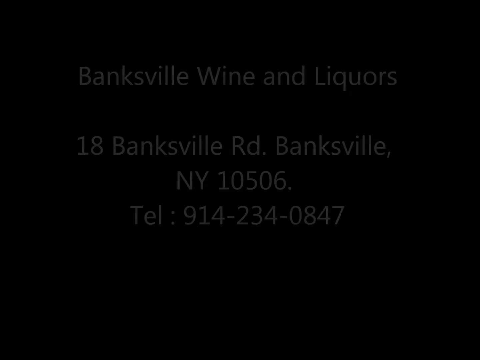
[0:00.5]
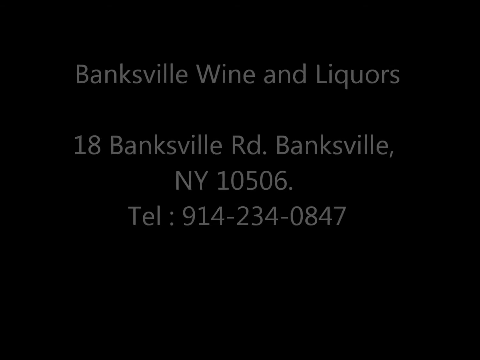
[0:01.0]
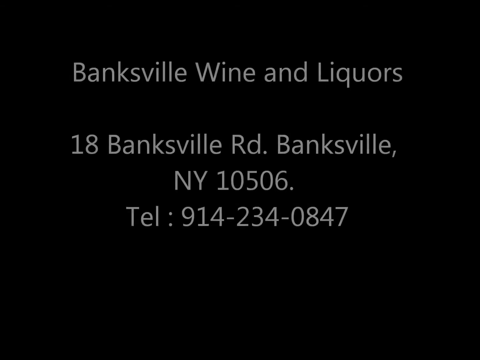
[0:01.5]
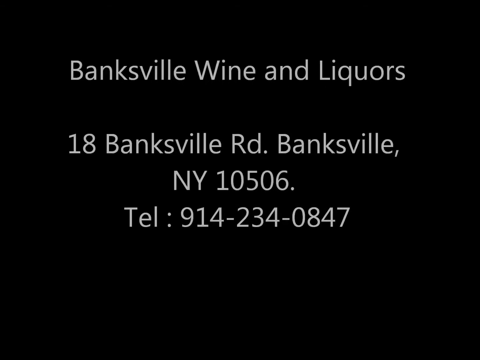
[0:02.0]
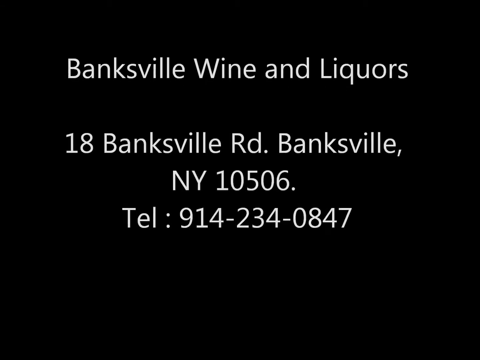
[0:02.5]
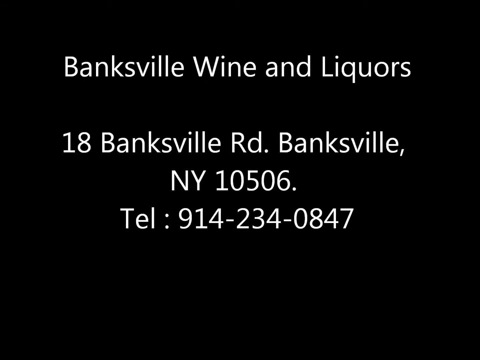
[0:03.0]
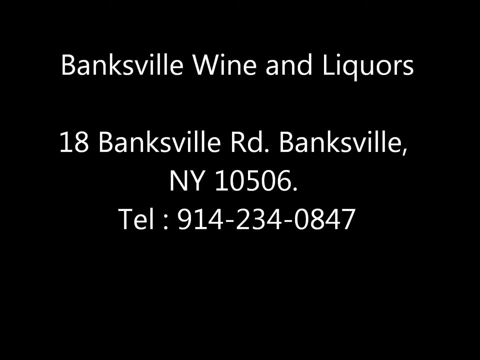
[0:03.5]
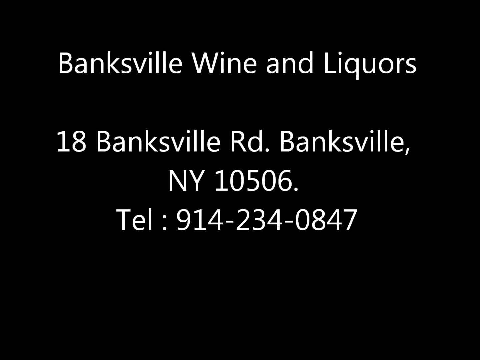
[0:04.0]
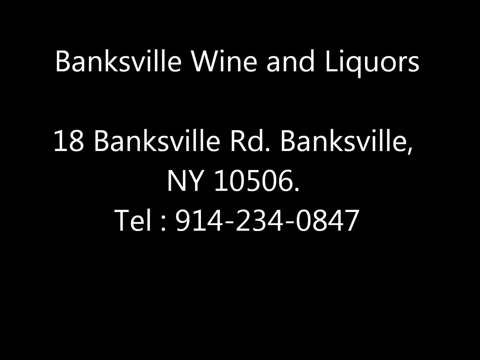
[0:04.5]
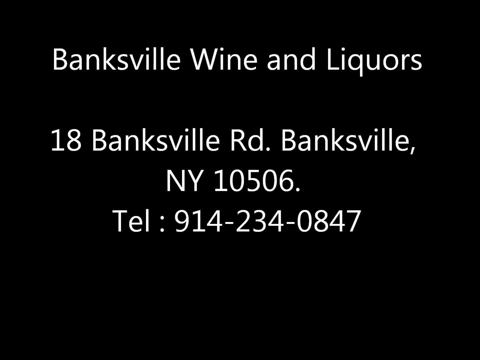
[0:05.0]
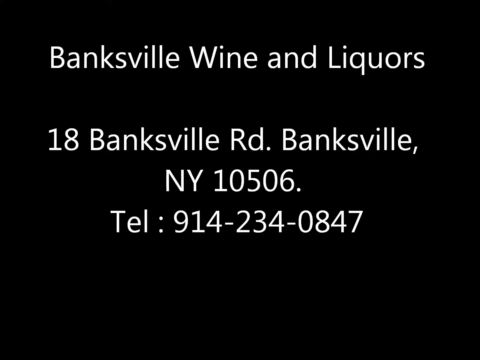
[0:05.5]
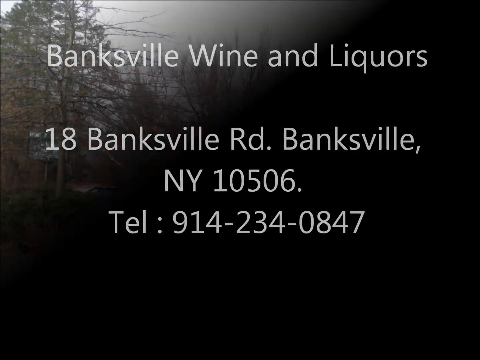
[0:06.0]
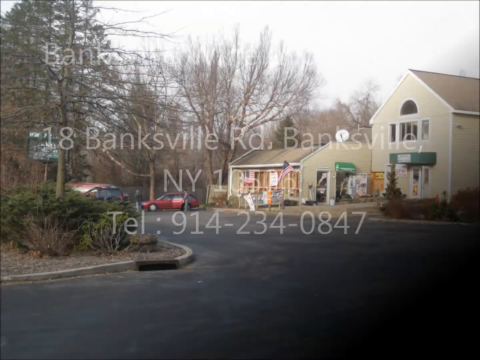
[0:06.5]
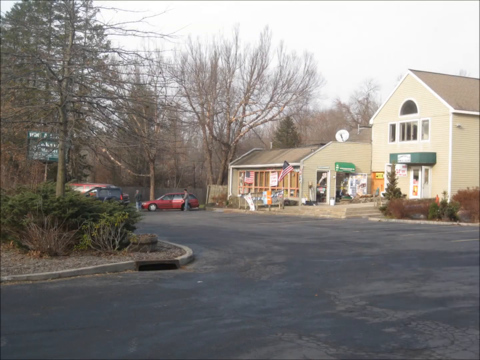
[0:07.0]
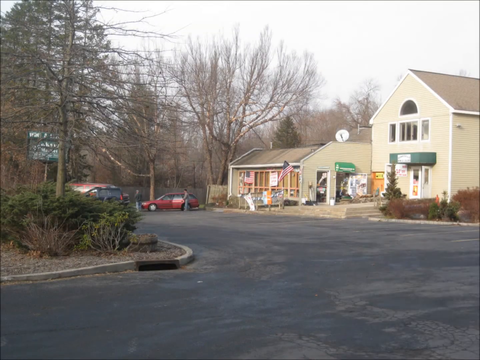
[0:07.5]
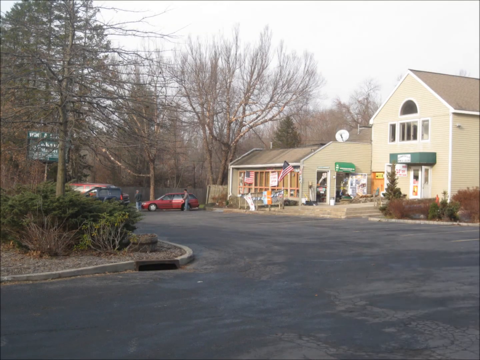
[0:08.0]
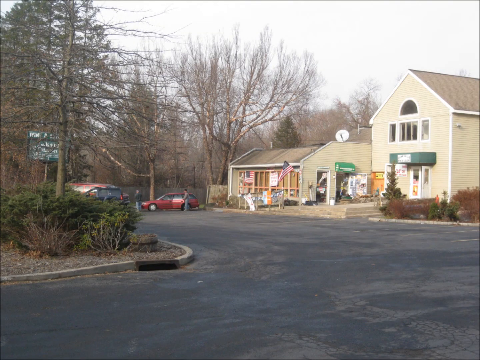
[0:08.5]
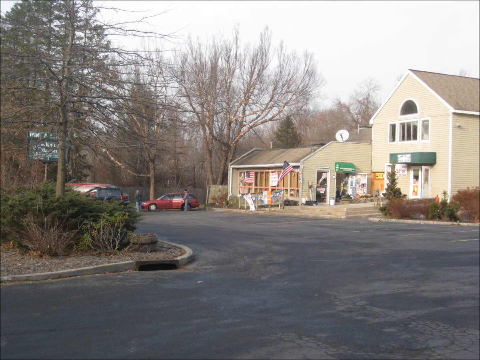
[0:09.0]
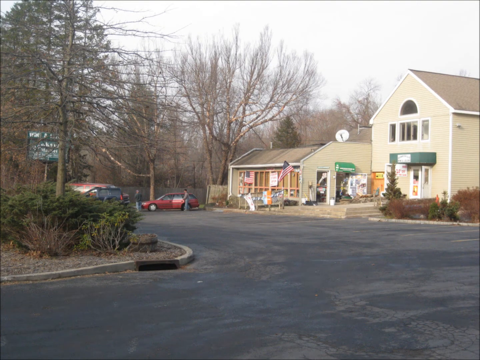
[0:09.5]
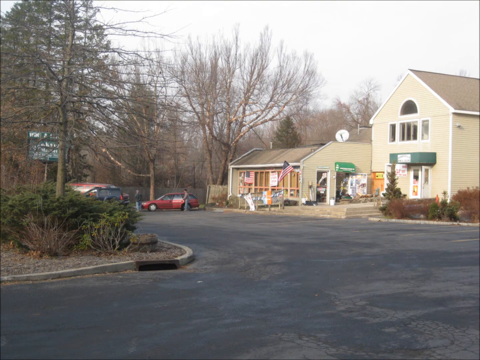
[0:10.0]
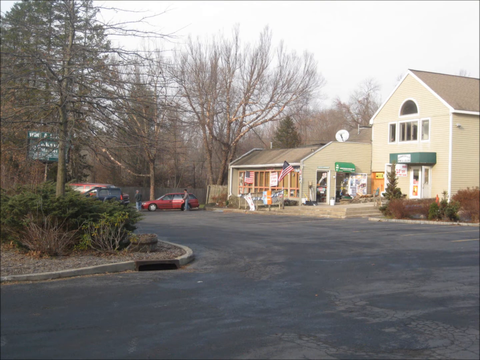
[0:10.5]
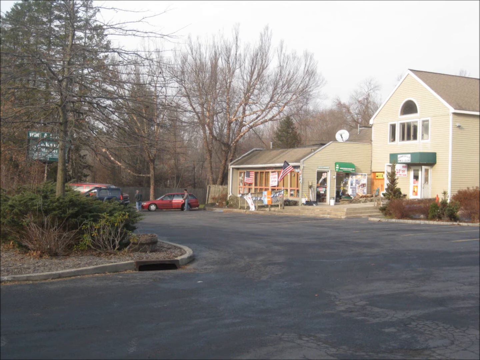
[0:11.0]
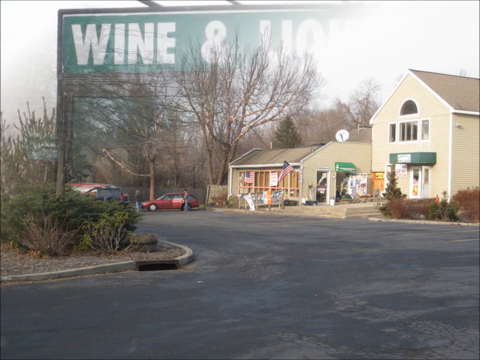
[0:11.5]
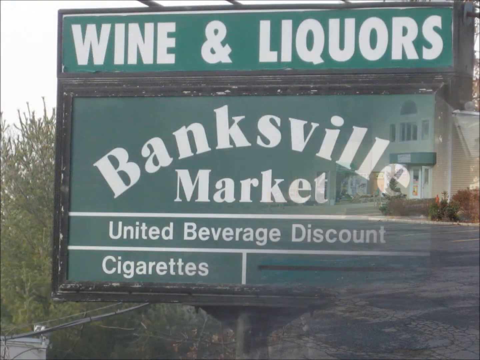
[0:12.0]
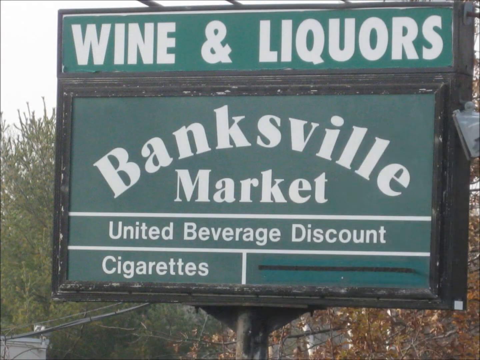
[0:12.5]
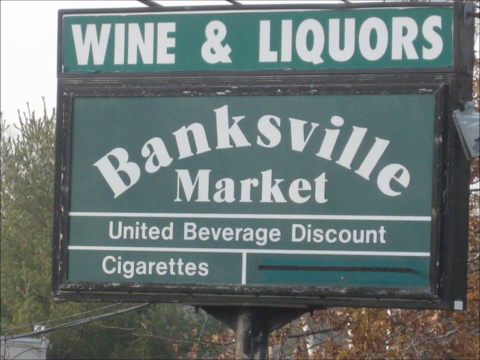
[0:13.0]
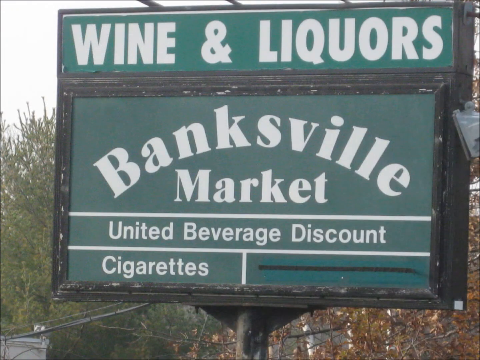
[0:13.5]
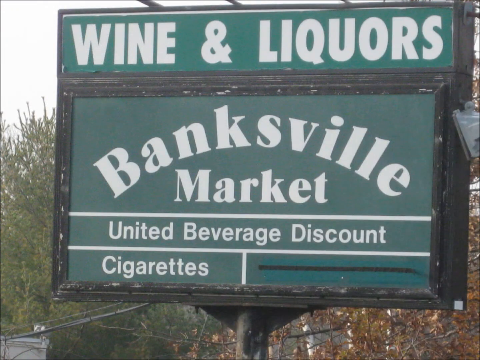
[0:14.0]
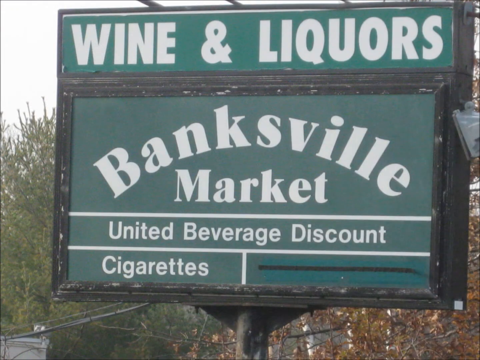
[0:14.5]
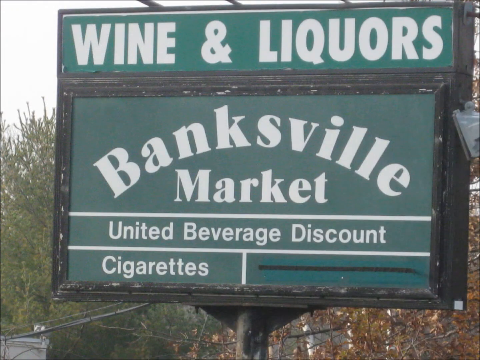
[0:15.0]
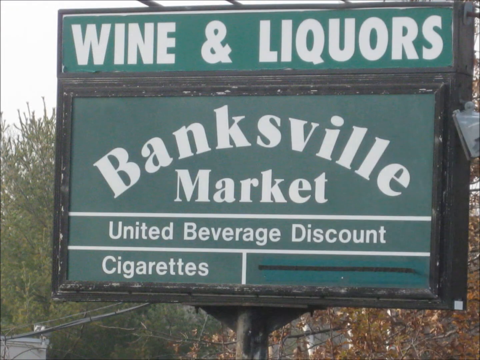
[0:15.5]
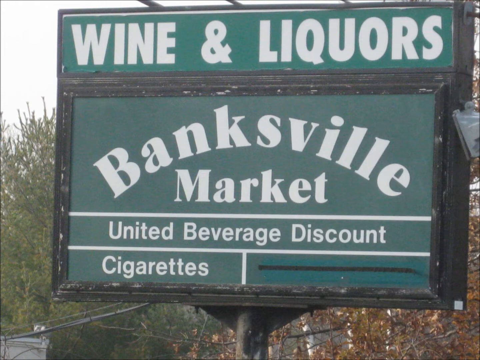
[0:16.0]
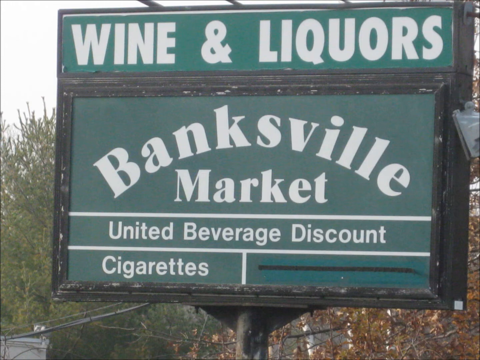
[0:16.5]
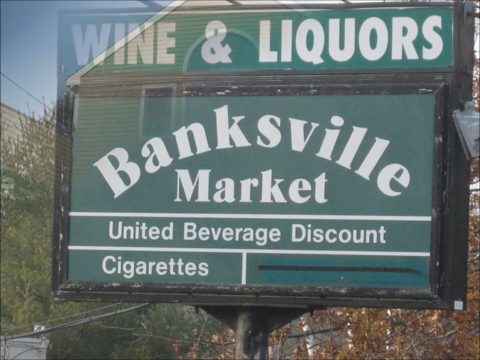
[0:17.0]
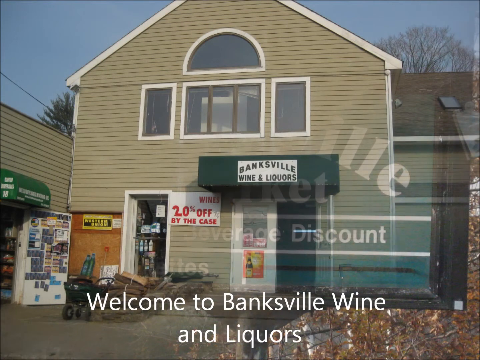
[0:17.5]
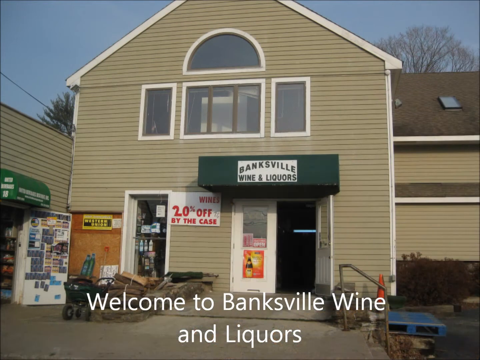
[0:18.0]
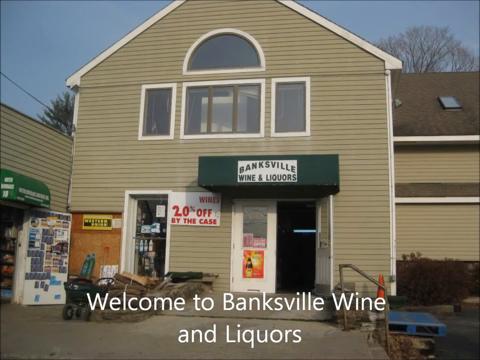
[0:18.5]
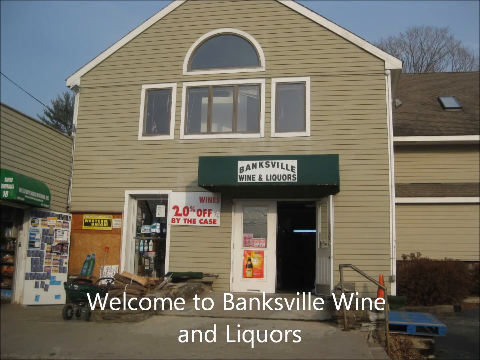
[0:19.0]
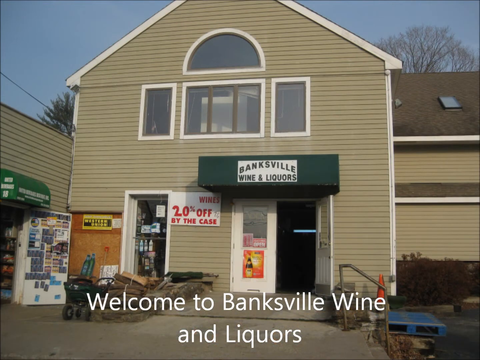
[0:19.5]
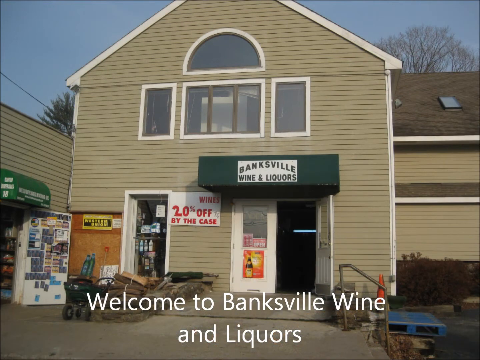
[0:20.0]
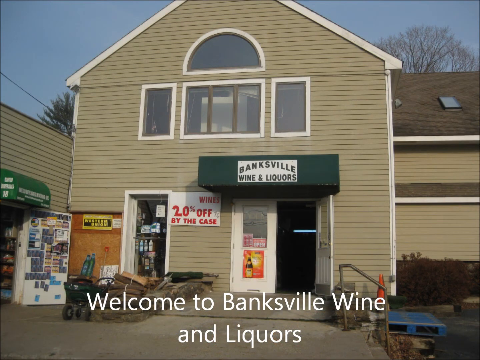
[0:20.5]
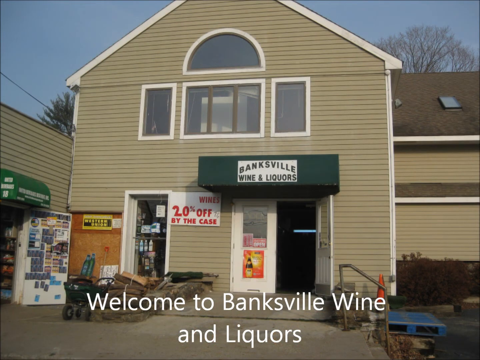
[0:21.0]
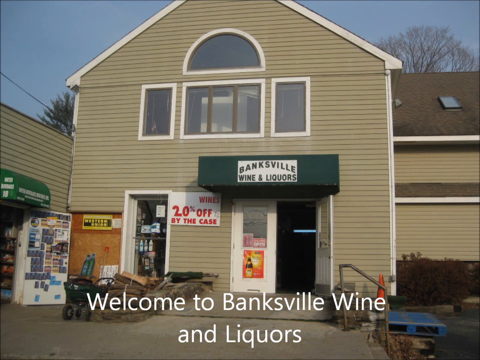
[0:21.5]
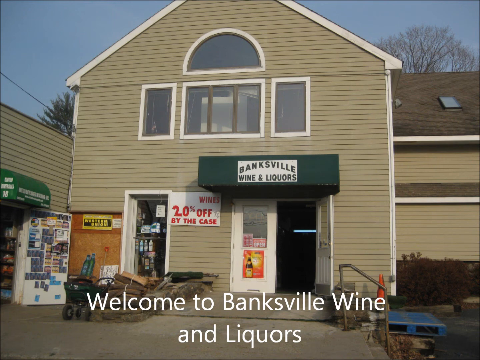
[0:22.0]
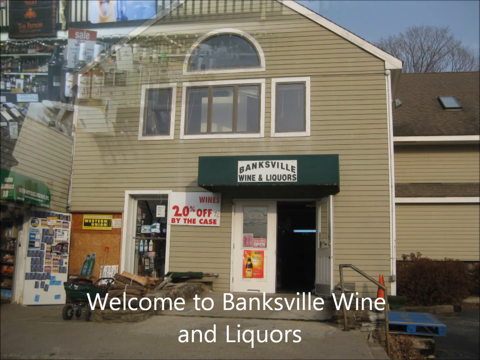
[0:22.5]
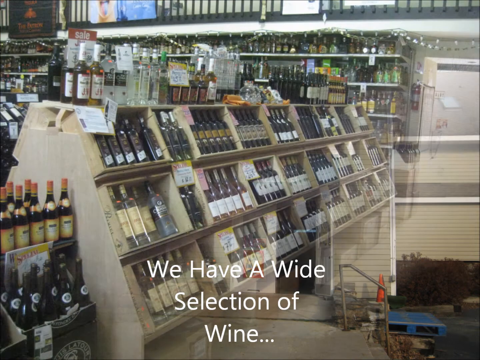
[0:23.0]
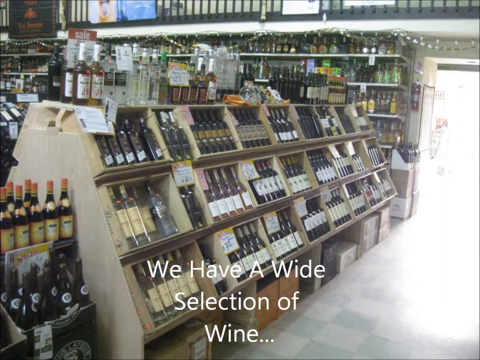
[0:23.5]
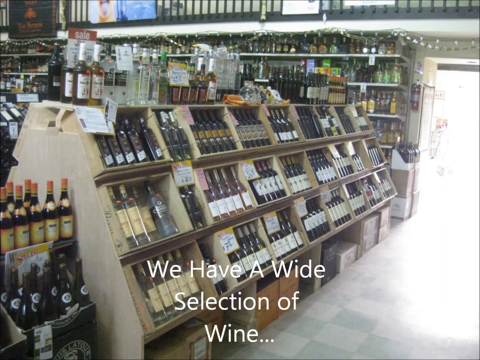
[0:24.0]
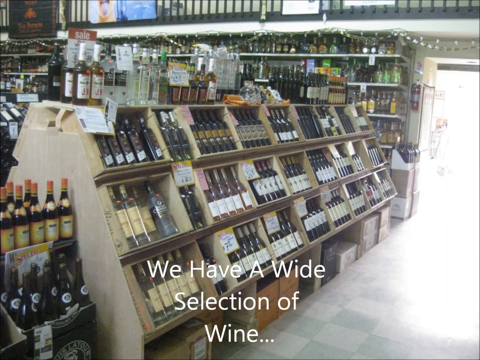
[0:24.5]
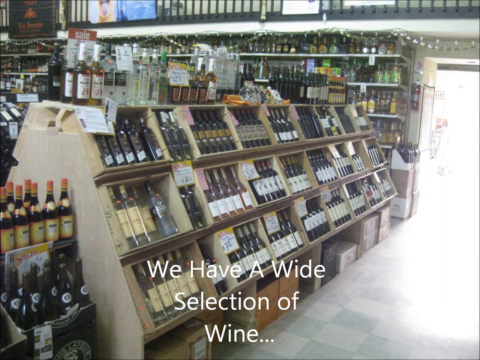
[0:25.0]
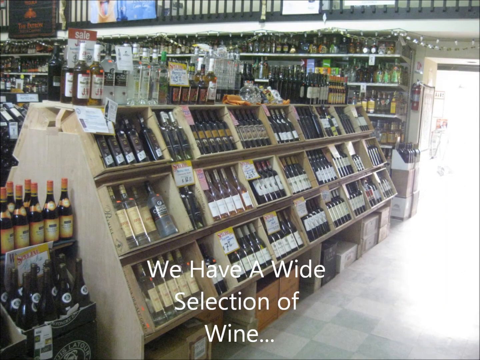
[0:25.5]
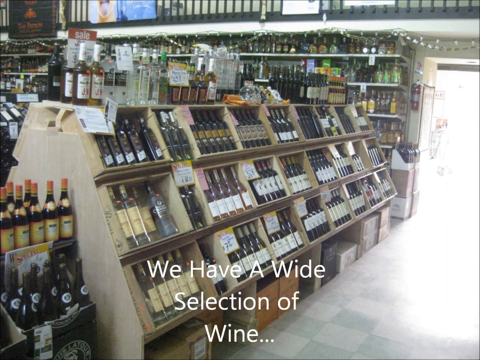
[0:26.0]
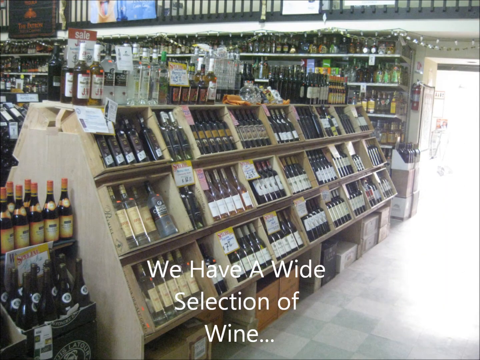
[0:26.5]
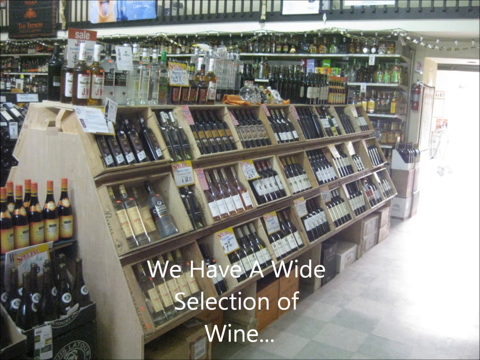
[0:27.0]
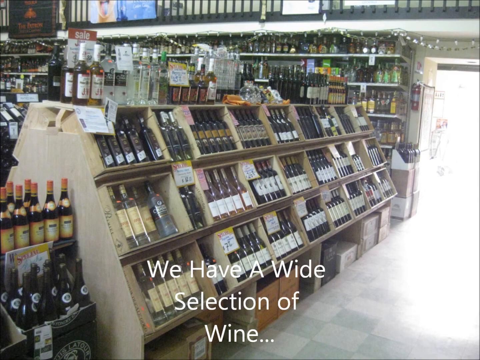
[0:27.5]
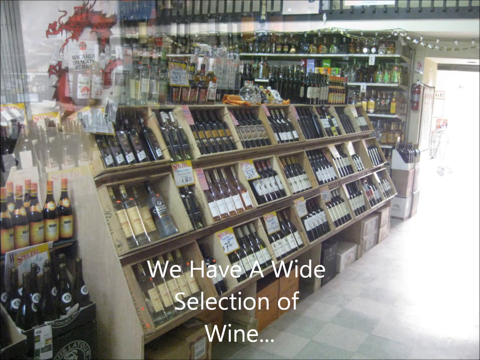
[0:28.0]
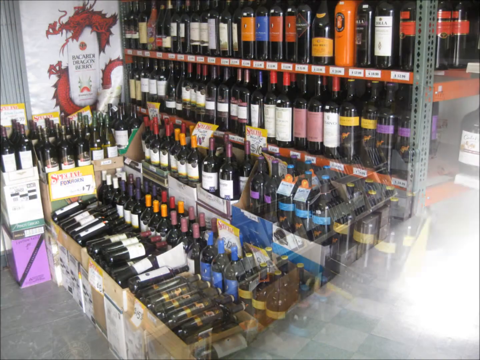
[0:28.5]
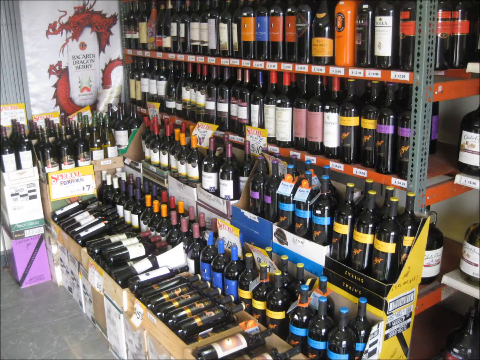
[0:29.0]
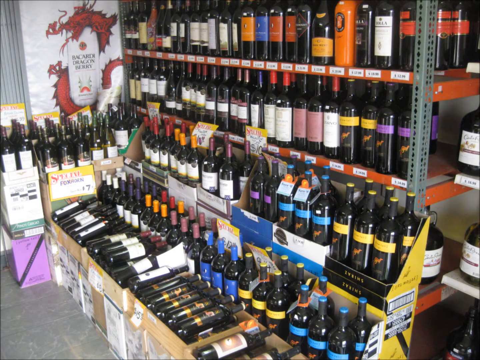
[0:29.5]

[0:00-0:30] The video opens on an all-black screen, then text reads "Banksville Wine and Liquors", followed after some space by "18 Banksville Road, Banksville," with "NY" and the zip code "10506" on the next line, and underneath that "TEL" with the number "914-234-0847". It appears to be an advertisement in which the company promotes itself. The setting looks like an old small town that seems stuck in time, with signs reading "Wine and Liquors", "Banksville Market", "United Beverage", "Discount" and "Cigarettes". The front of the store is shown with "20% off" and "buy case wines", and then the inside of the store appears with "we have a wide selection of wine". Different images of wine bottles follow, all of which look dark.